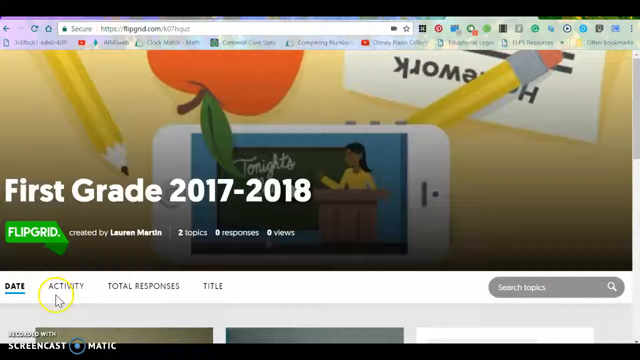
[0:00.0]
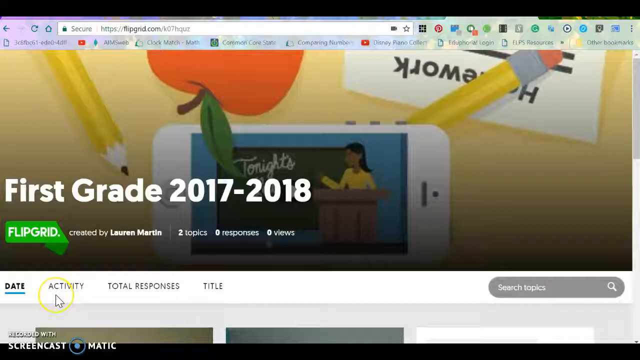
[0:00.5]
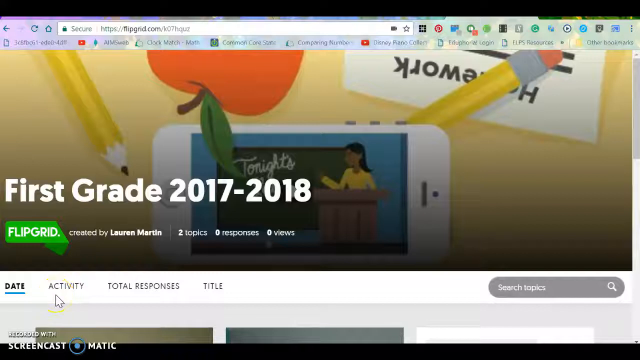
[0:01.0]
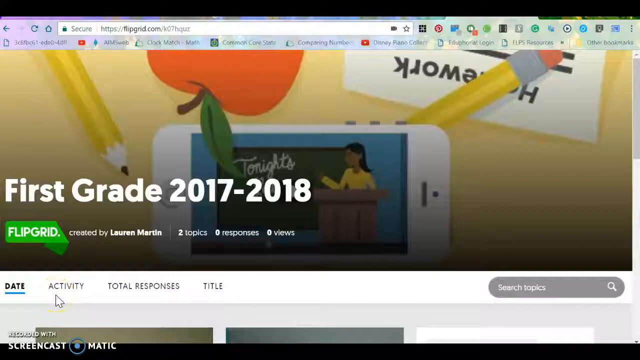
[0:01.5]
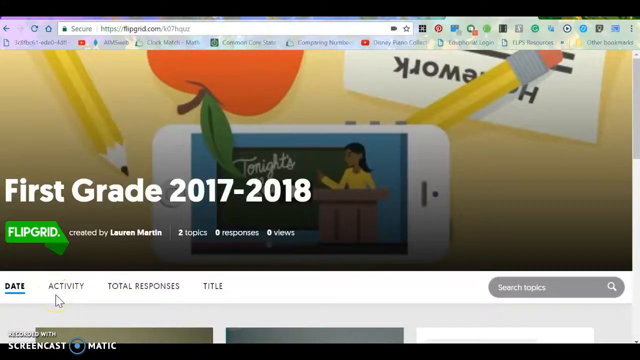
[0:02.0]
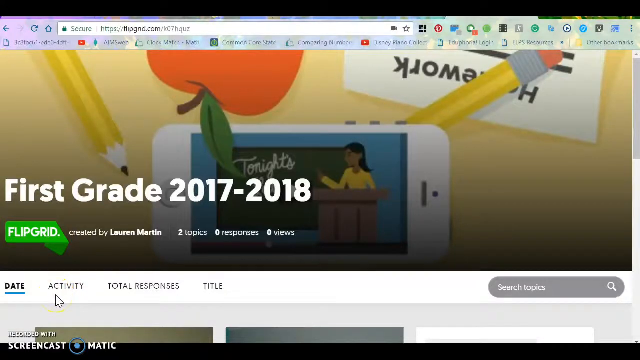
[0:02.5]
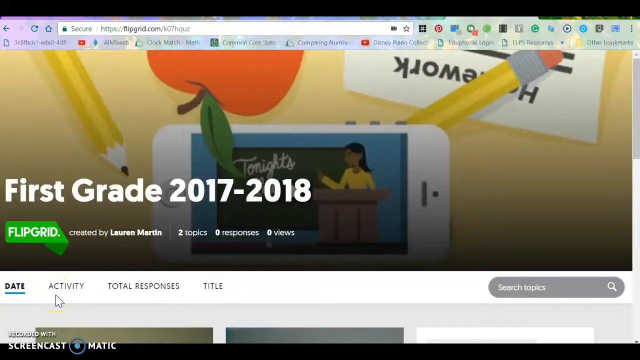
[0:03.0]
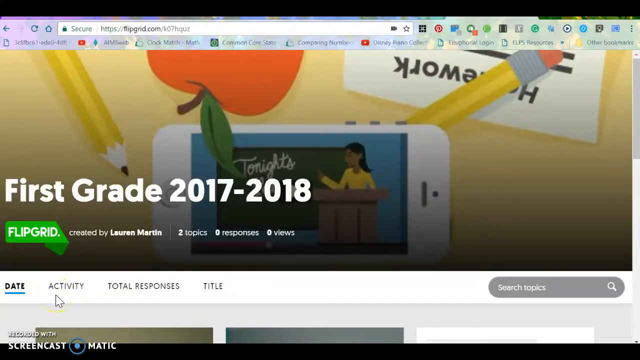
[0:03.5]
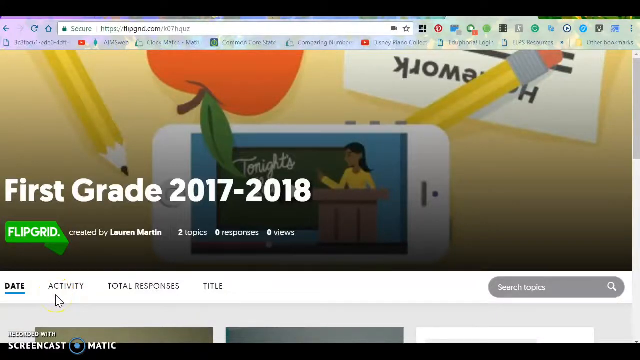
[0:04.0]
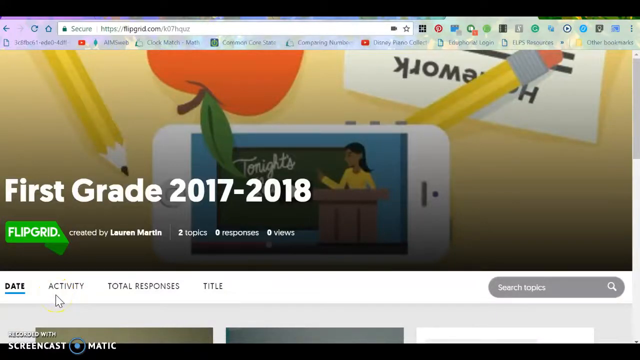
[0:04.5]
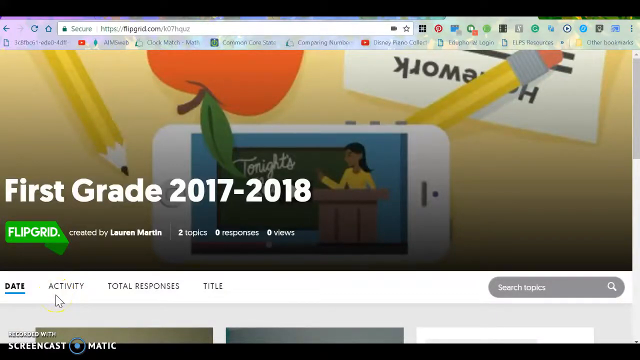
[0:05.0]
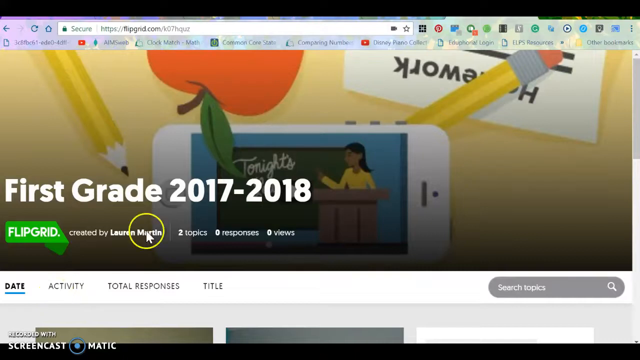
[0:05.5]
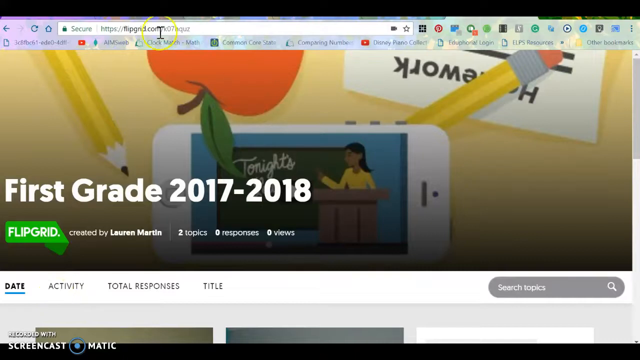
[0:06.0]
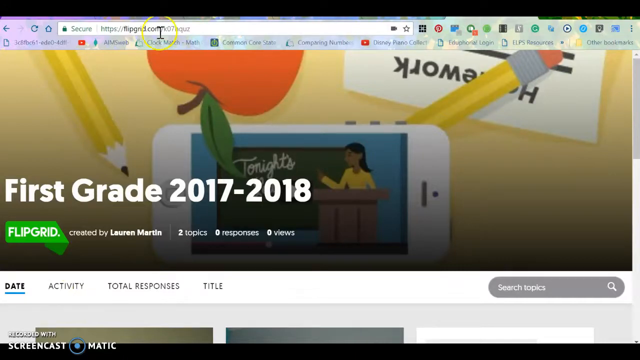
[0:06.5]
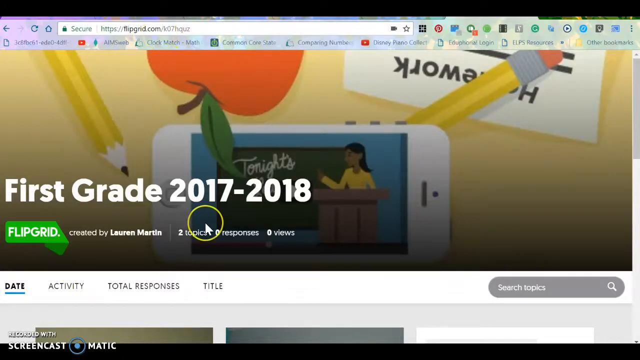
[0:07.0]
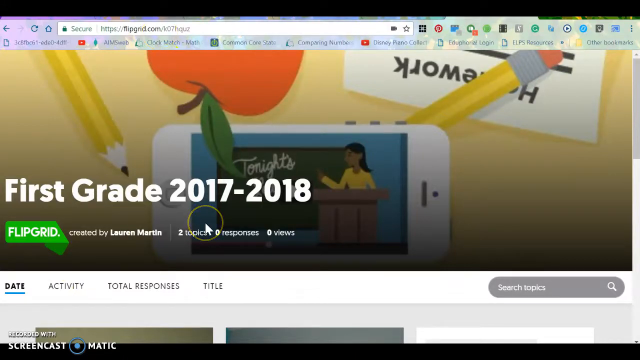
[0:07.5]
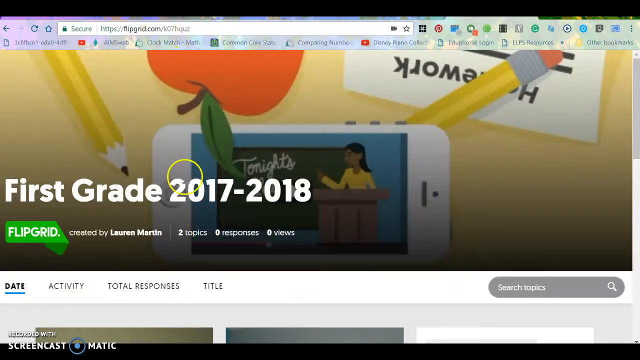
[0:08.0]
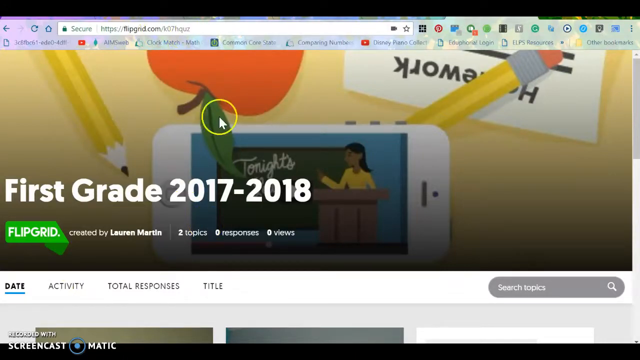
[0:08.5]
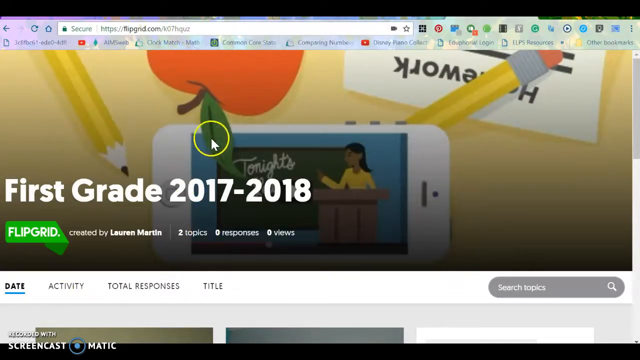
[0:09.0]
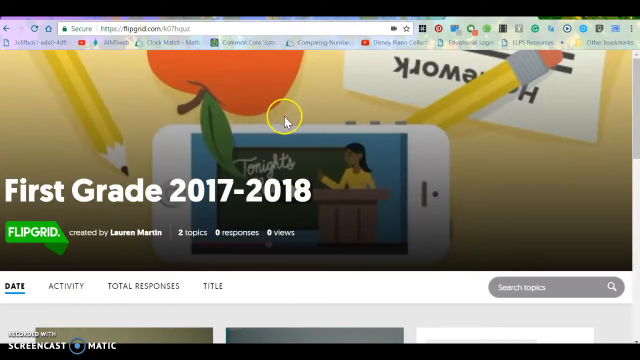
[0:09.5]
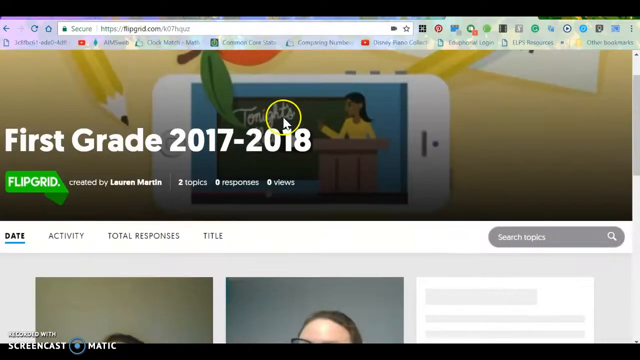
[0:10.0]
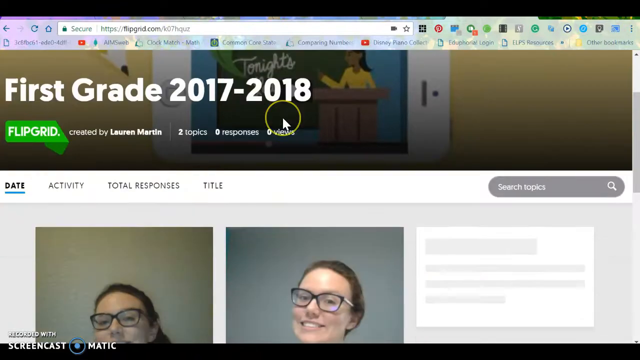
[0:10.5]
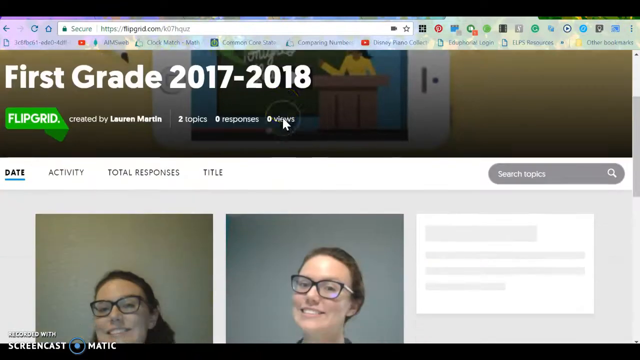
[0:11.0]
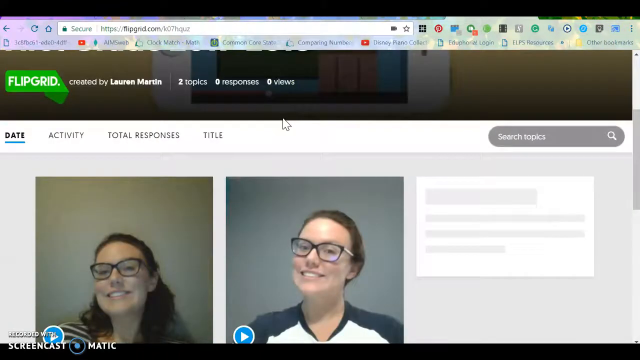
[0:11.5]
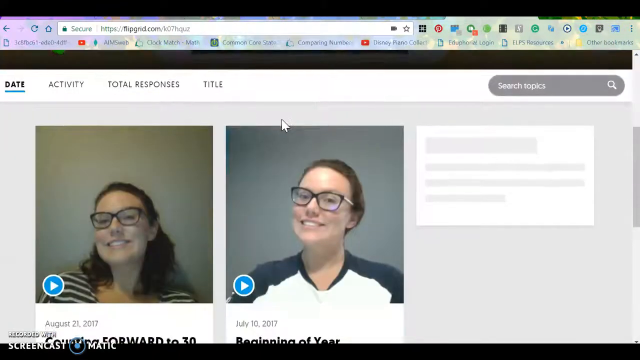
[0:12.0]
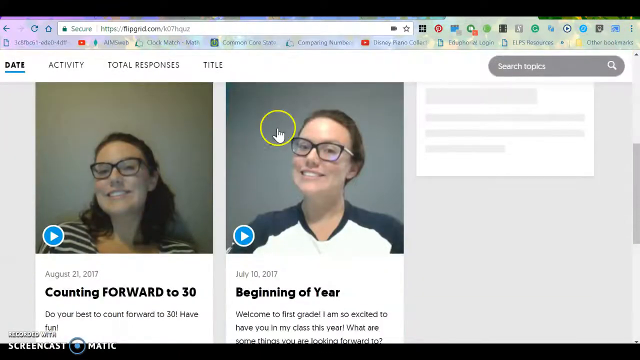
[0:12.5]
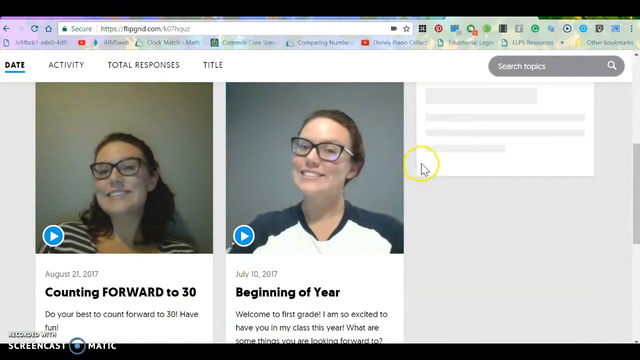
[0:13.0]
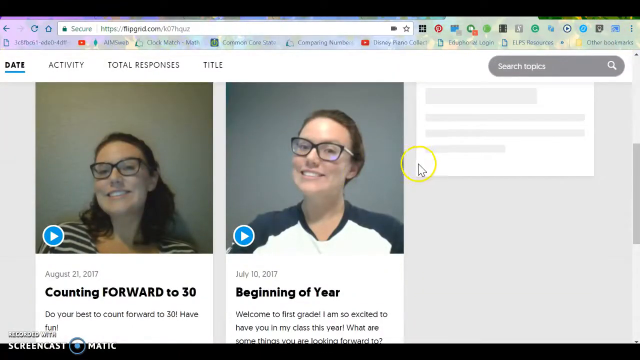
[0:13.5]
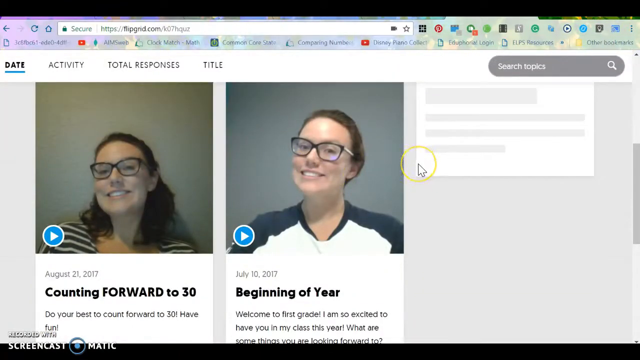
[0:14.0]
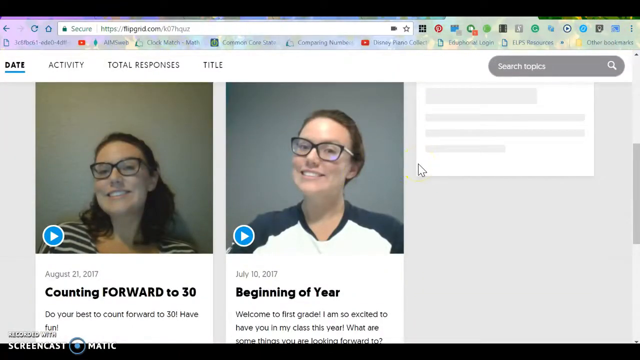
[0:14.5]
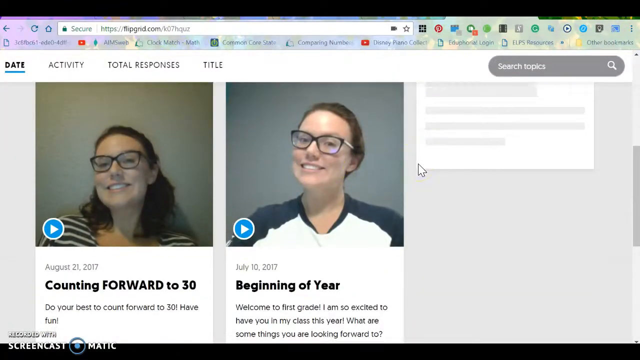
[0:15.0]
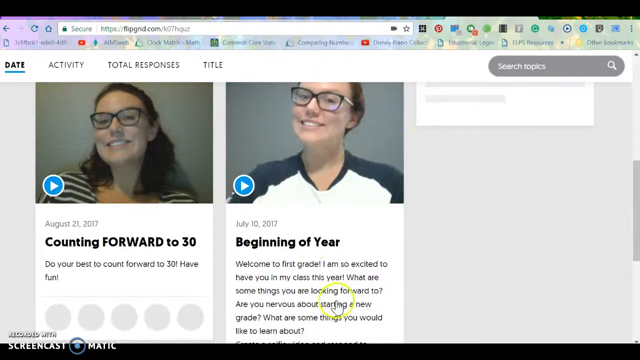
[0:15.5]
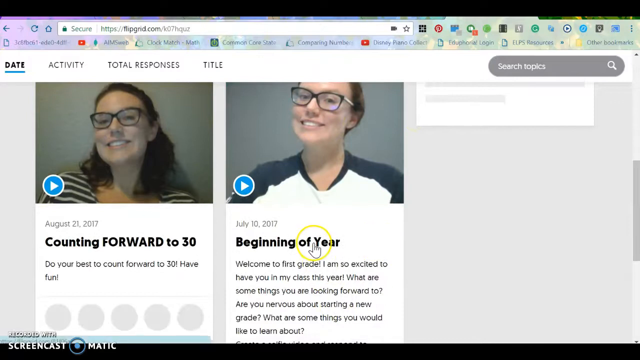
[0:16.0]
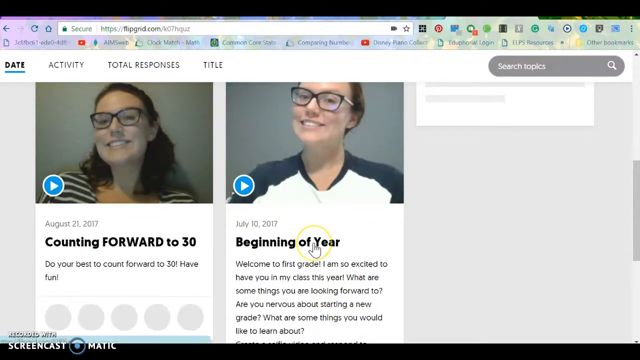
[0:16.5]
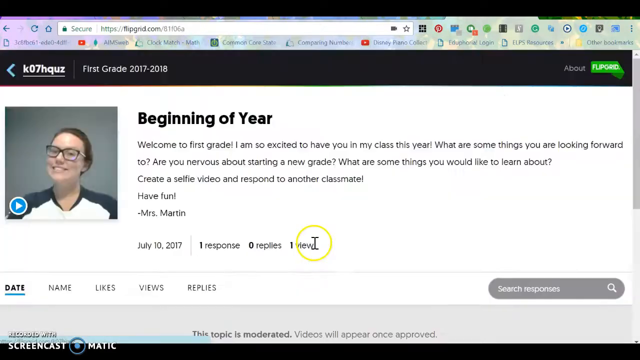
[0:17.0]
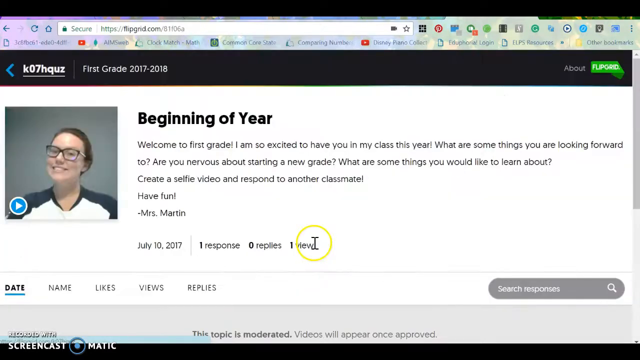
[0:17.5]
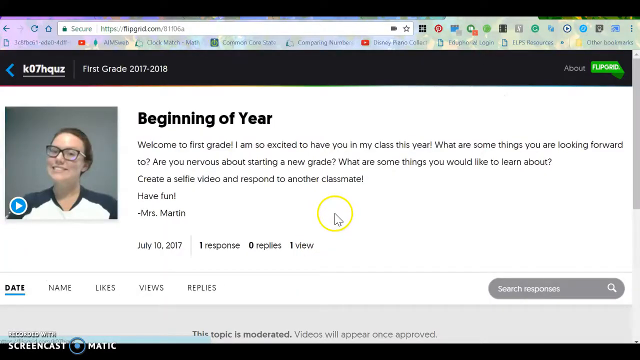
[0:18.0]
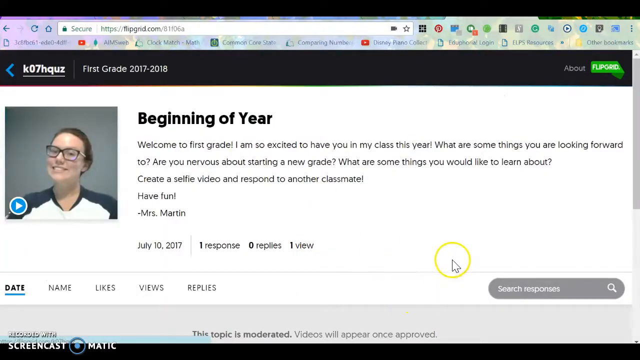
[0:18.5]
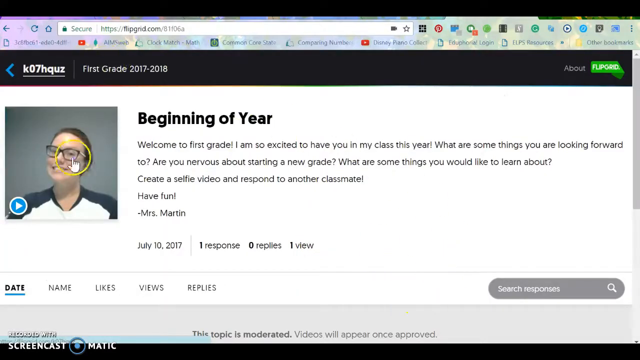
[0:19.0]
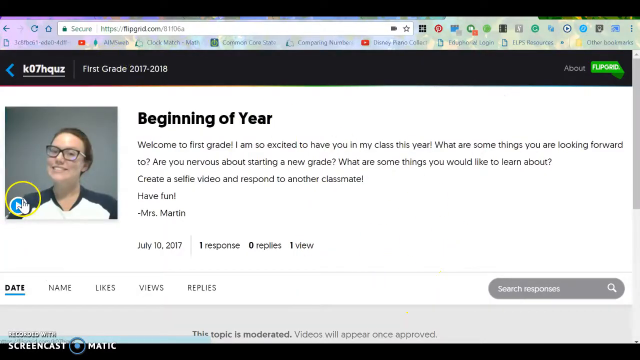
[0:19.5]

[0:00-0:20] A screen recording shows a YouTube channel page for first grade, 2017 to 2018. The page has a drawing of an apple, a pencil, a smartphone and a pen, and behind them a homework sign that is upside down. The person making the video clicks a circled option labeled "activity" and then navigates downward. There are pictures of two ladies, both wearing glasses. From there a video labeled "beginning of year" is linked, with the text "welcome to first grade I'm excited to have you in my class." It seems to be some kind of online class; it is by Flipgrid and created by Lauren Martin. Many topics can be chosen from the topics option, and there are responses, views and total responses by title.